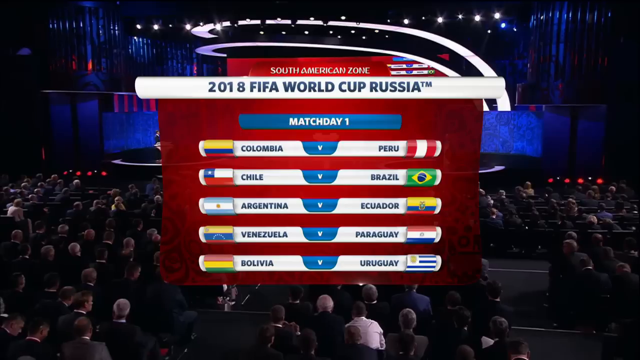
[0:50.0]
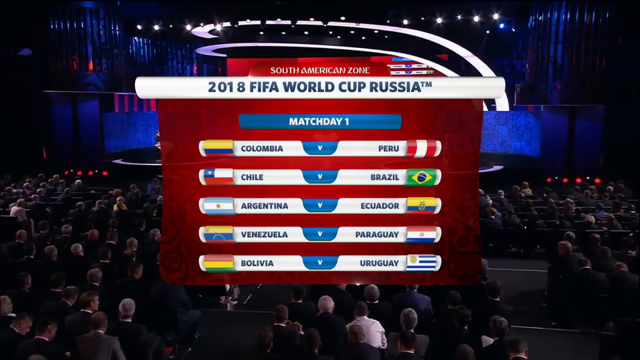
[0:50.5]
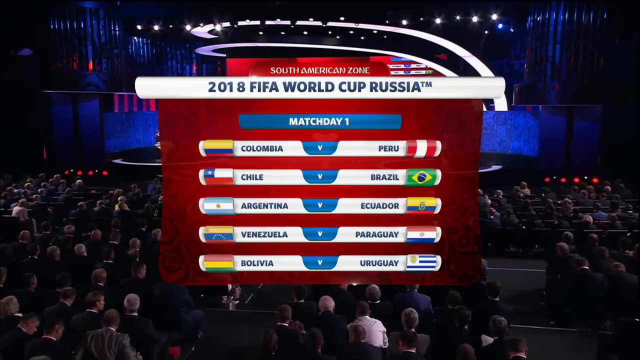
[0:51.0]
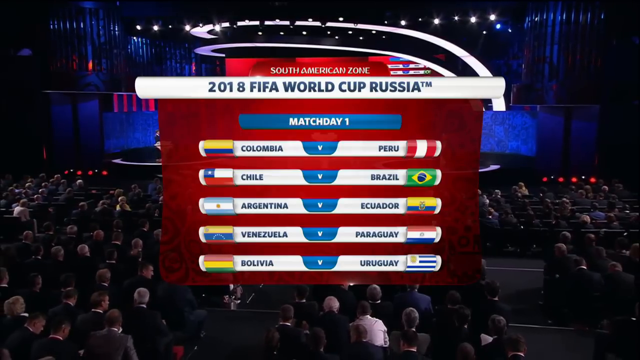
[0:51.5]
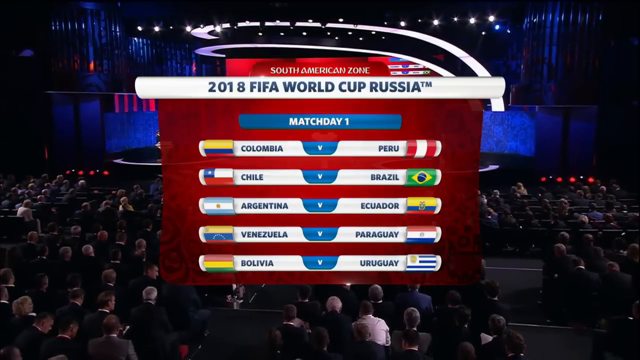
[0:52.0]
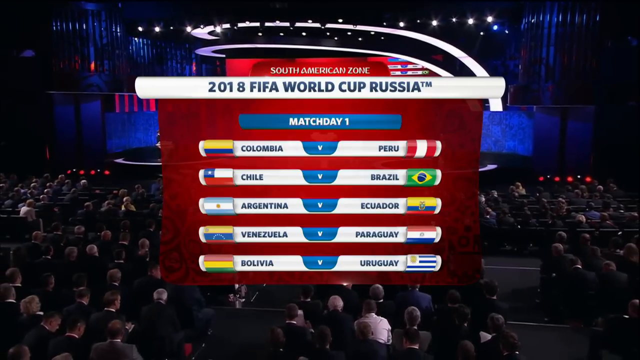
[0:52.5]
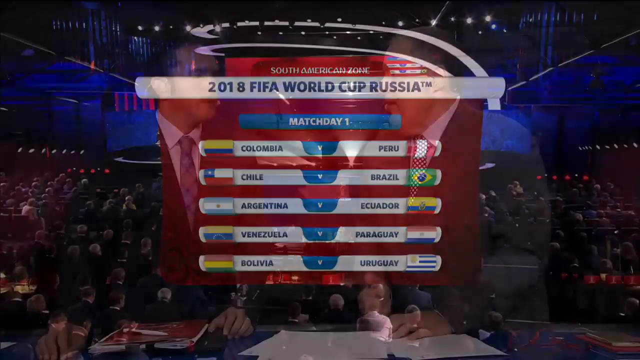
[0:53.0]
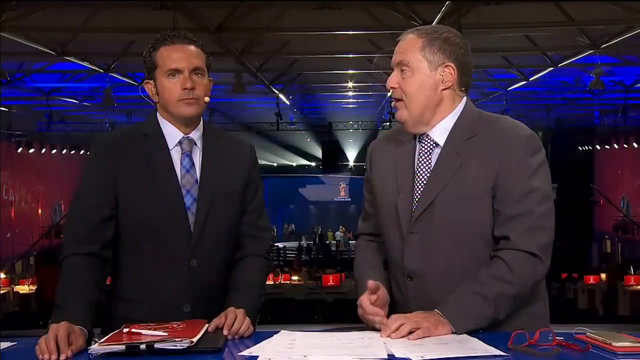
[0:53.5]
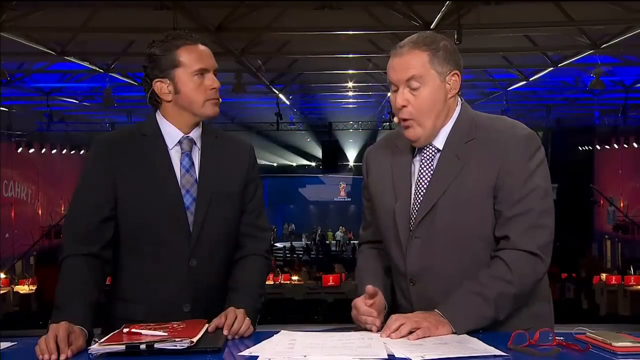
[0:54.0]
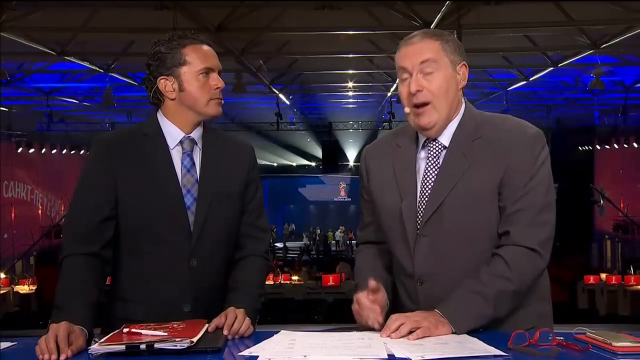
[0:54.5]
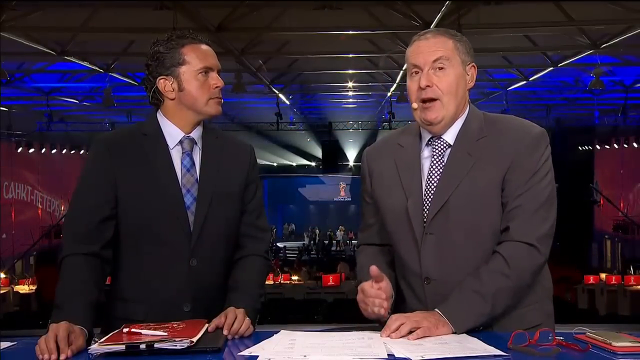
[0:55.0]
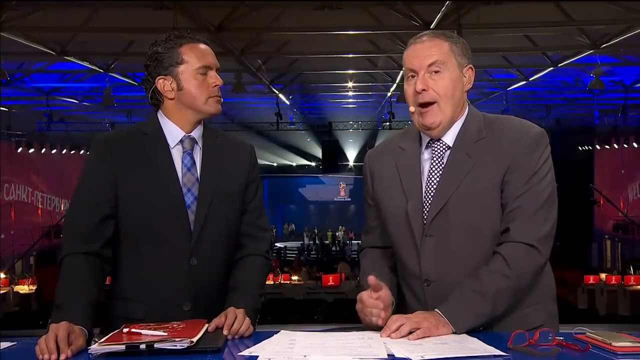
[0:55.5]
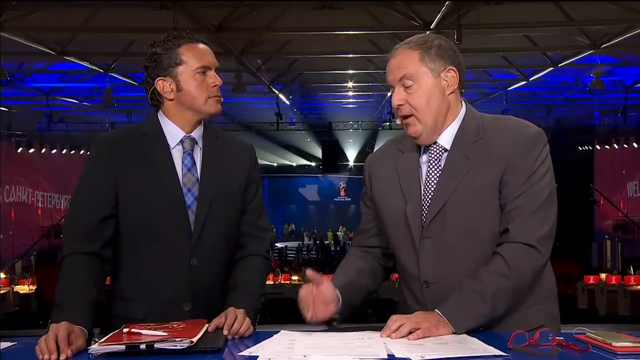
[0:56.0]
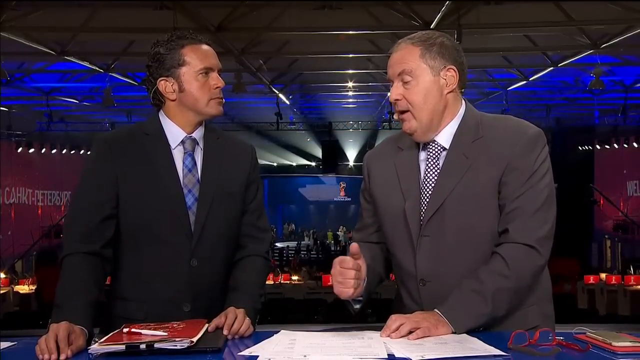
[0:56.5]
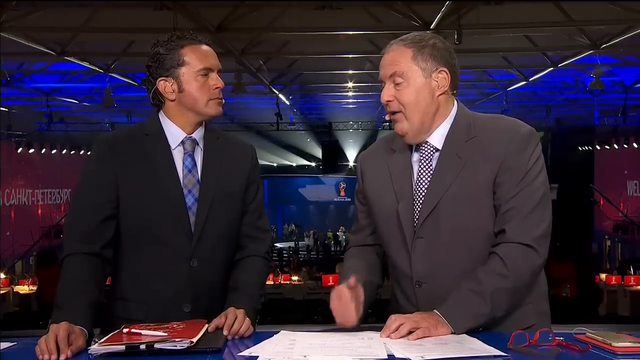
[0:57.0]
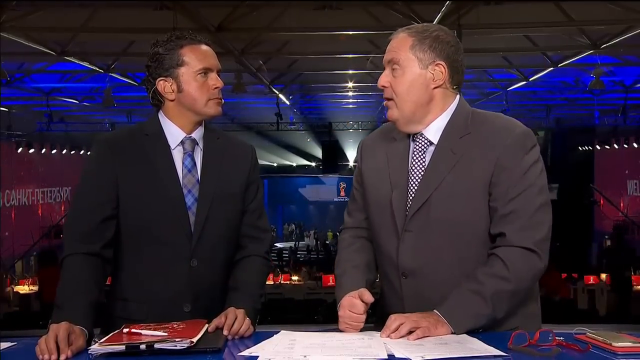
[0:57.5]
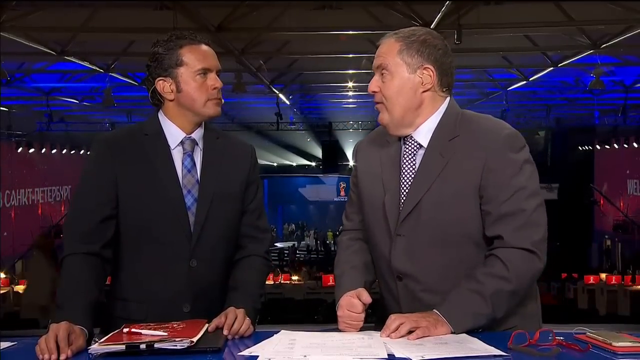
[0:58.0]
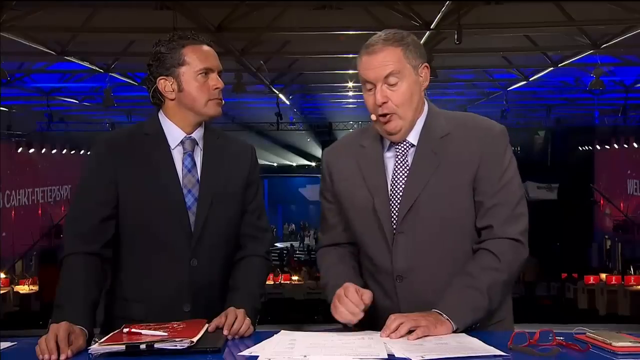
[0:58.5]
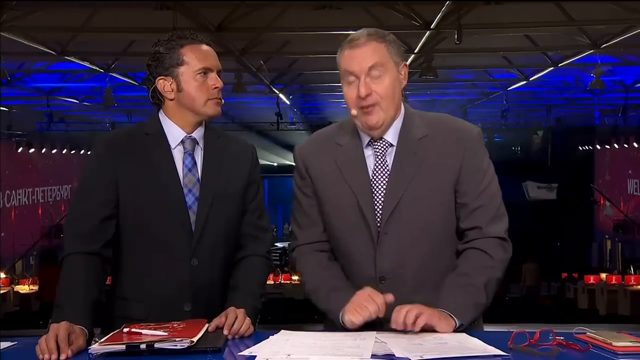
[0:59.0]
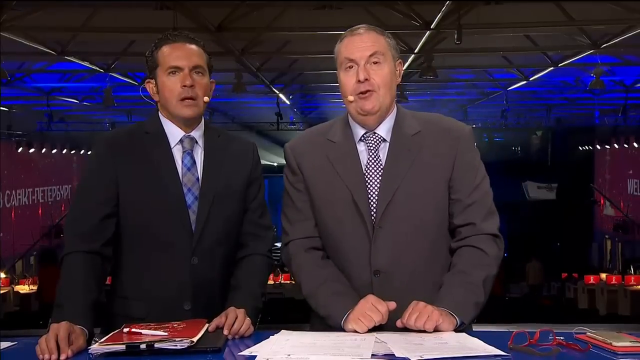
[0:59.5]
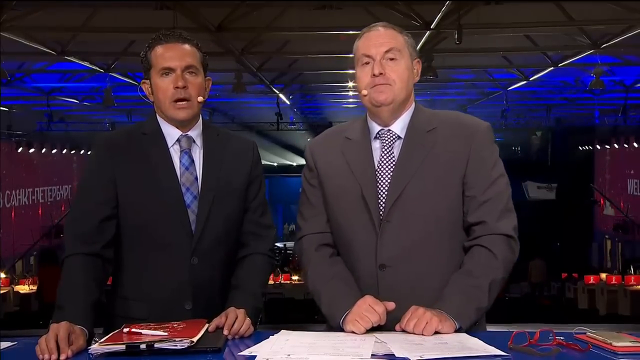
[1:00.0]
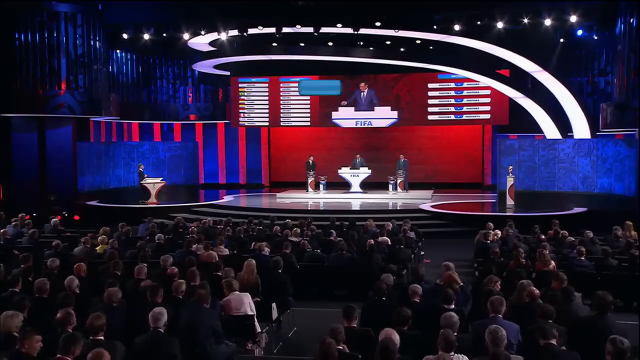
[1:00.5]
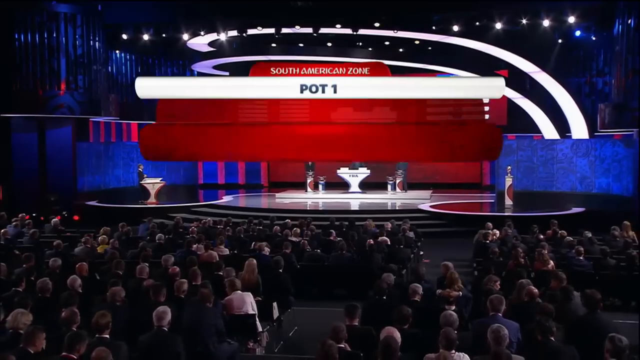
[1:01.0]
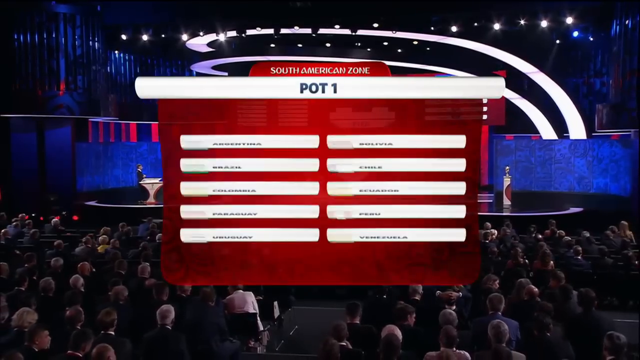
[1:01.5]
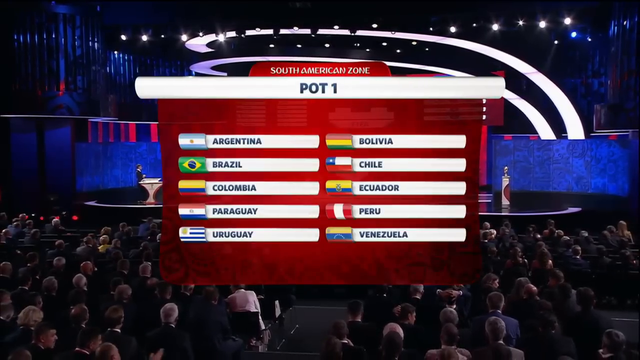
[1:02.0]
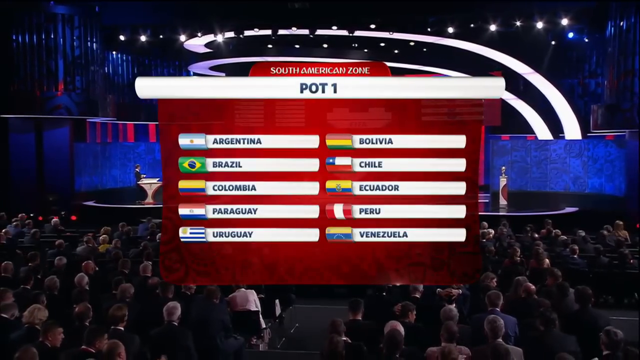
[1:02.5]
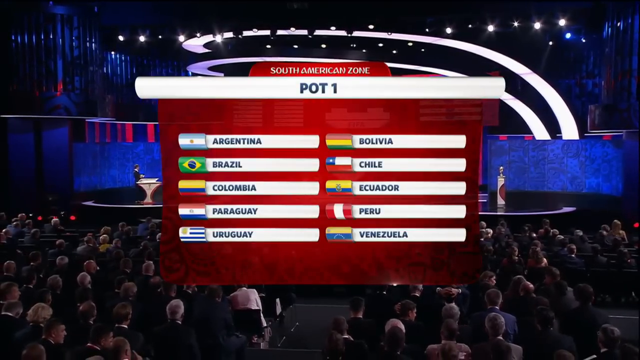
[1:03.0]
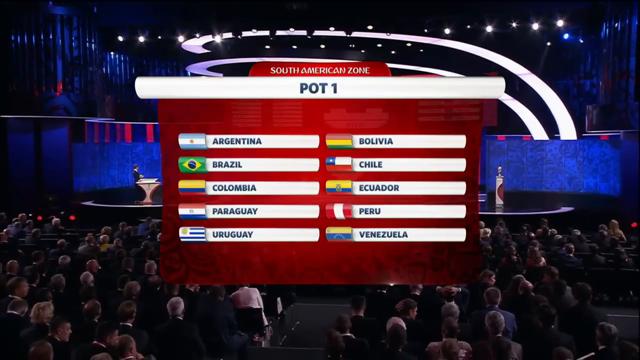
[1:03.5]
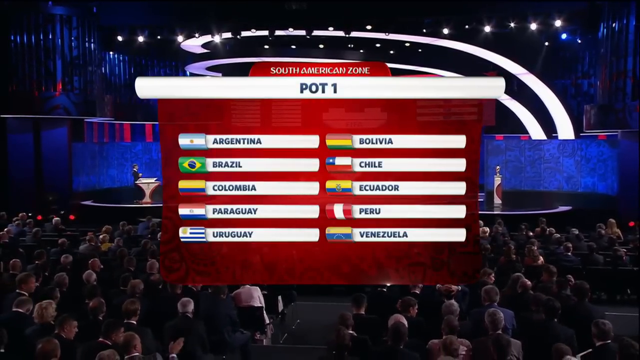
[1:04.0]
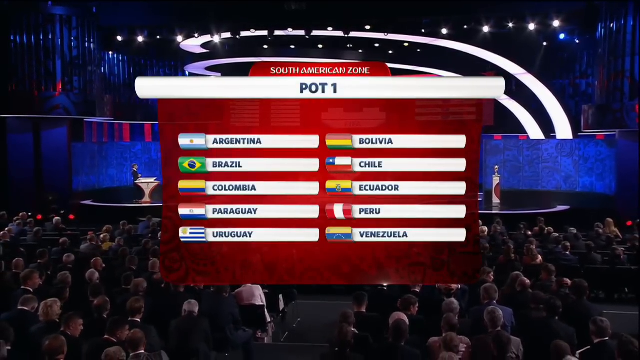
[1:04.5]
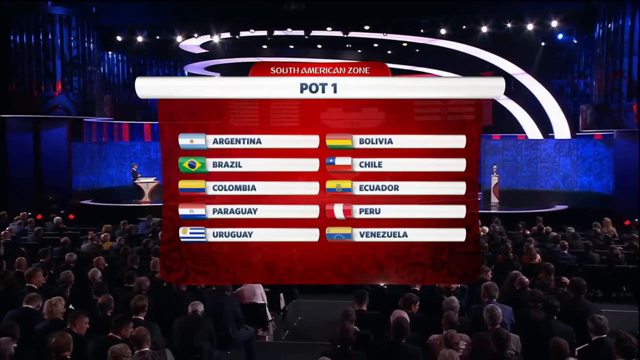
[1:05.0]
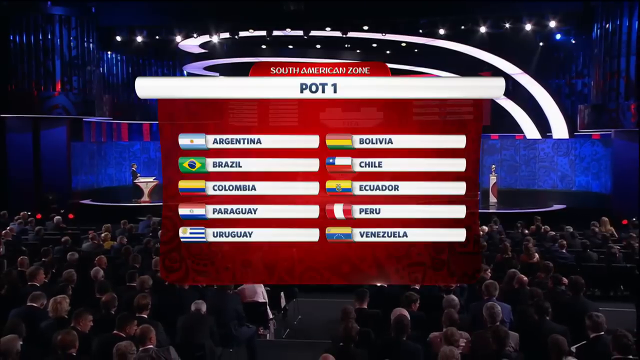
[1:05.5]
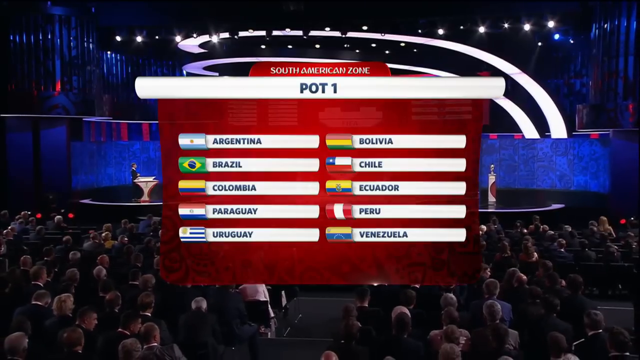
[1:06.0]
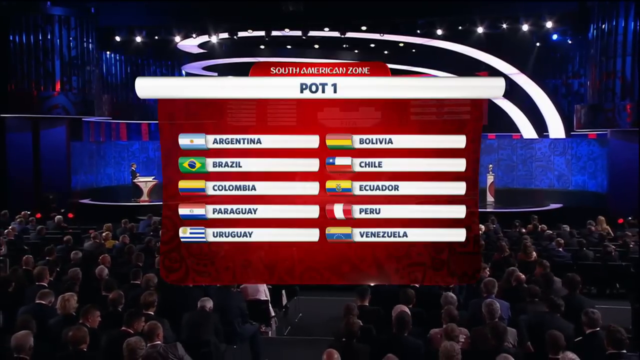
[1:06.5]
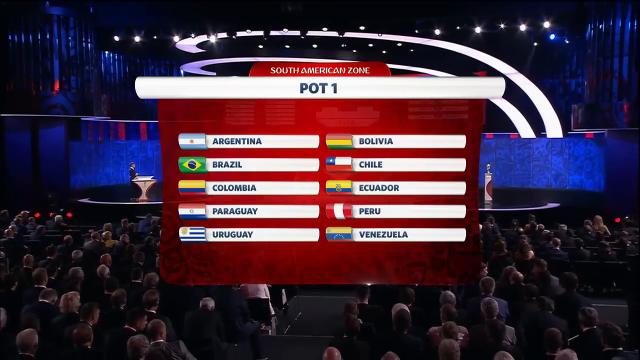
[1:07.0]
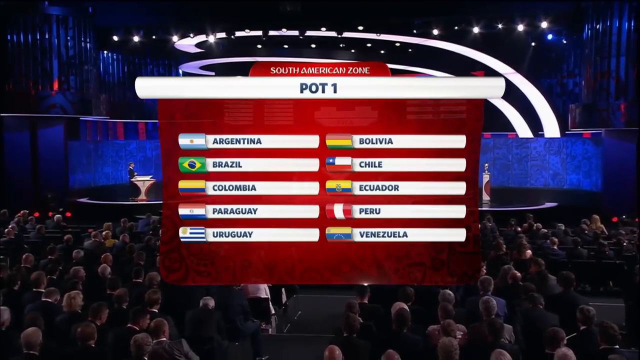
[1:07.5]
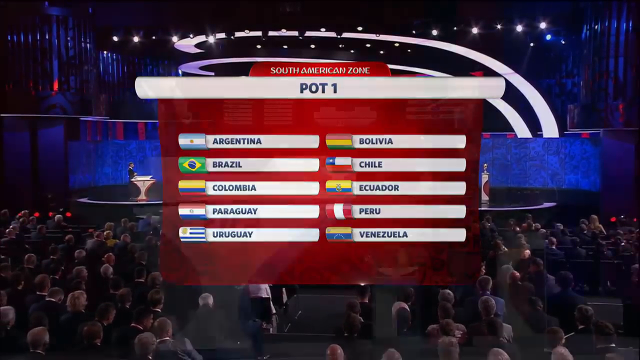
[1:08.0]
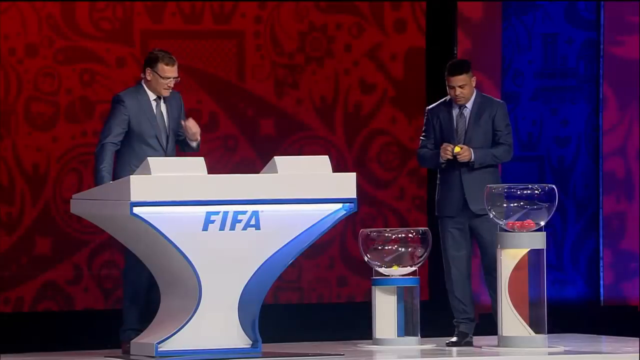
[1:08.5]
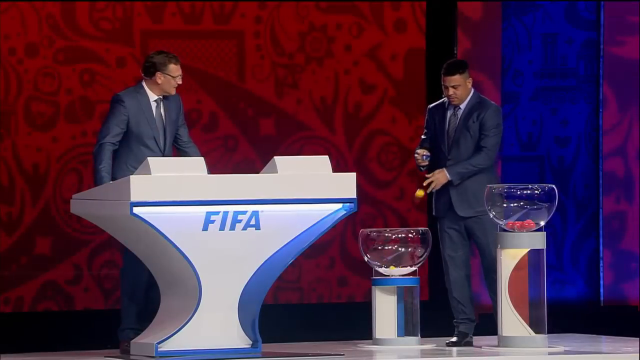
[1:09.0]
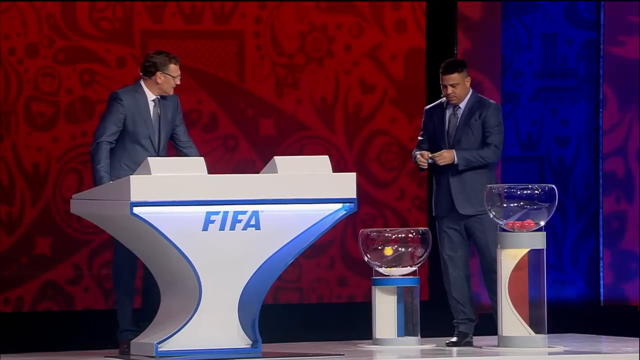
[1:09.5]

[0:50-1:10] The same text continues to be shown, reading "South American zone, 2018 FIFA World Cup Russia, match day one, Colombia versus Peru, Chile versus Brazil, Argentina versus Ecuador, Venezuela versus Paraguay, Bolivia versus Uruguay". In the background, several people are gathered in an indoor setting, mostly sitting down. The two sports news broadcasters appear; the man on the right speaks while making several hand gestures and tapping on the desk in front of him. Another screen then reads "South American zone, part one, Argentina, Bolivia, Brazil, Chile, Colombia, Ecuador, Paraguay, Peru, Uruguay, Venezuela", with each country's corresponding flag next to it. The video is in a rectangular shape.